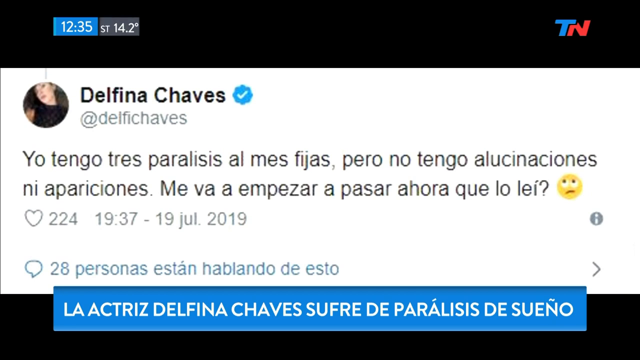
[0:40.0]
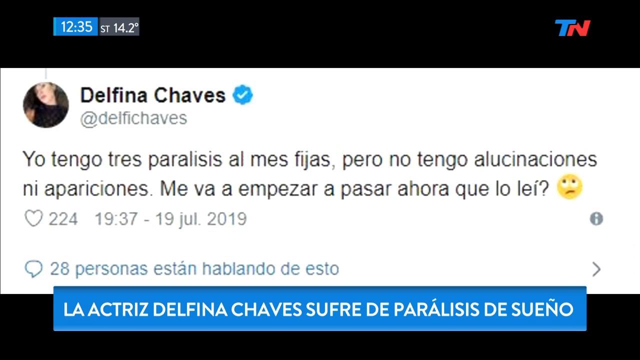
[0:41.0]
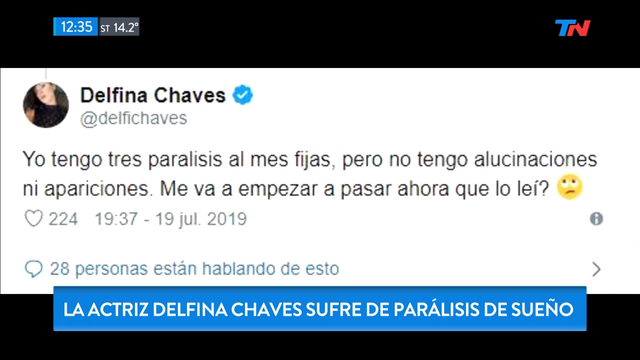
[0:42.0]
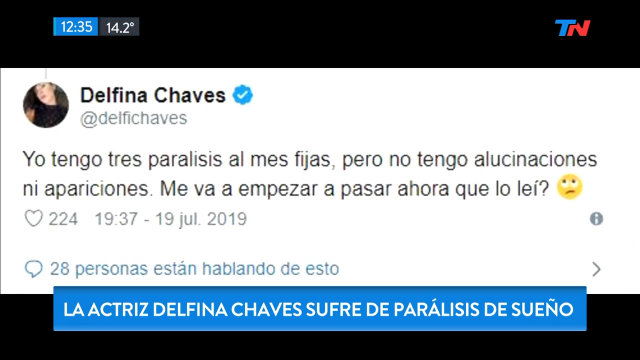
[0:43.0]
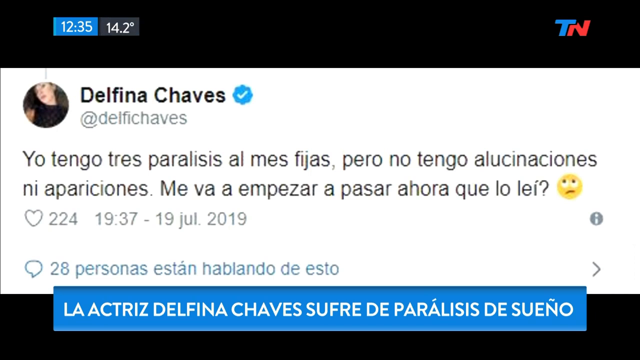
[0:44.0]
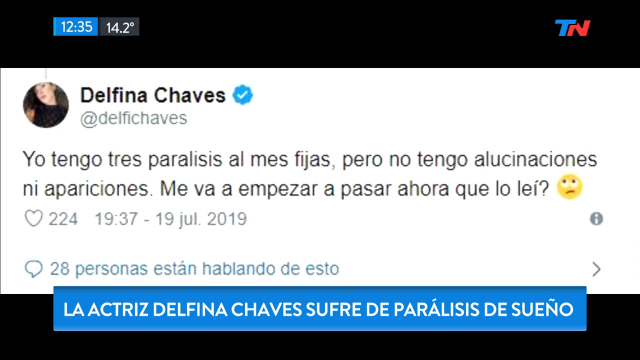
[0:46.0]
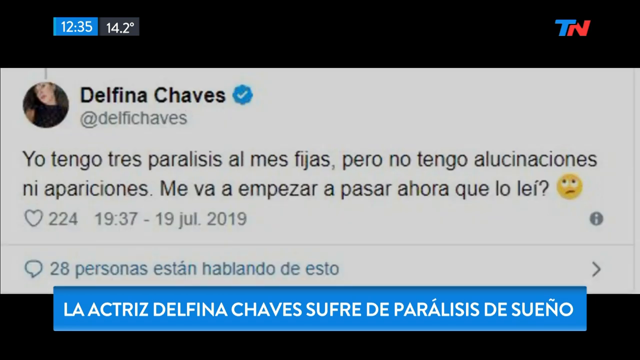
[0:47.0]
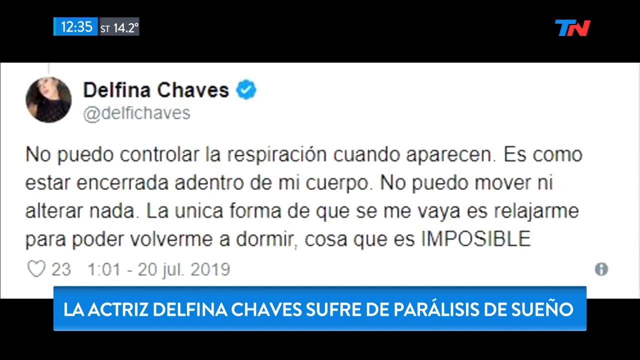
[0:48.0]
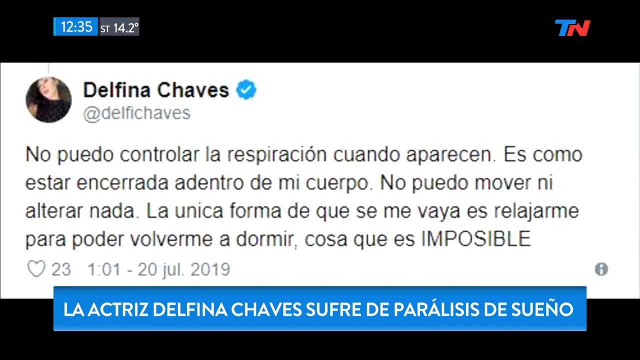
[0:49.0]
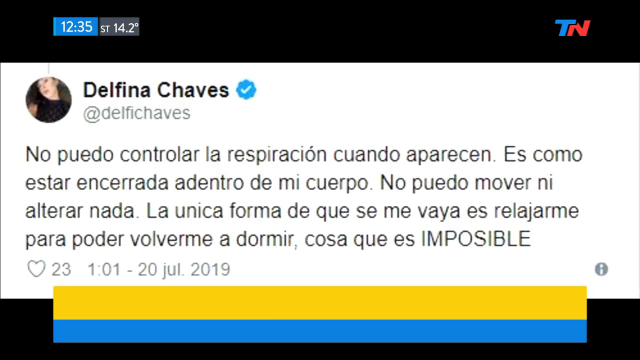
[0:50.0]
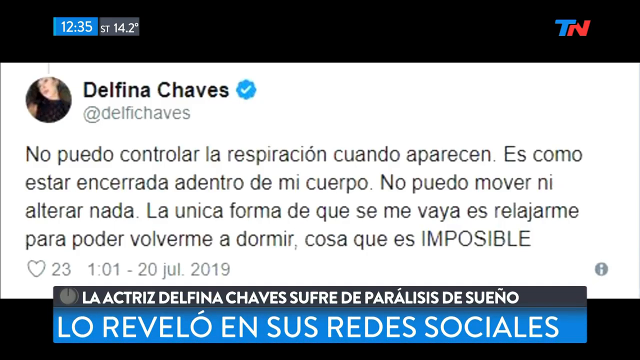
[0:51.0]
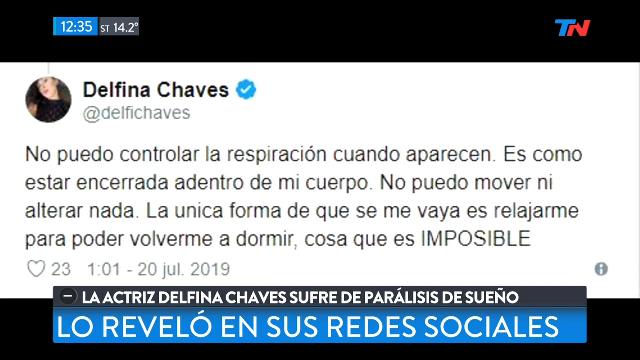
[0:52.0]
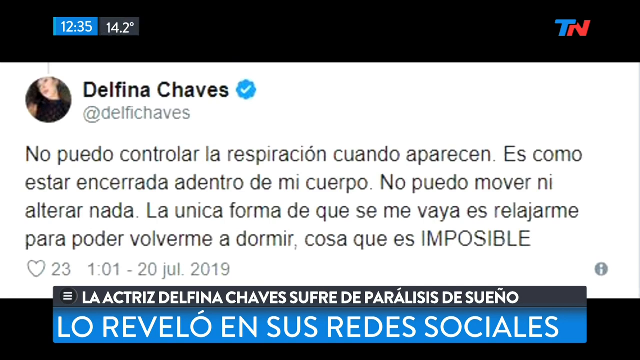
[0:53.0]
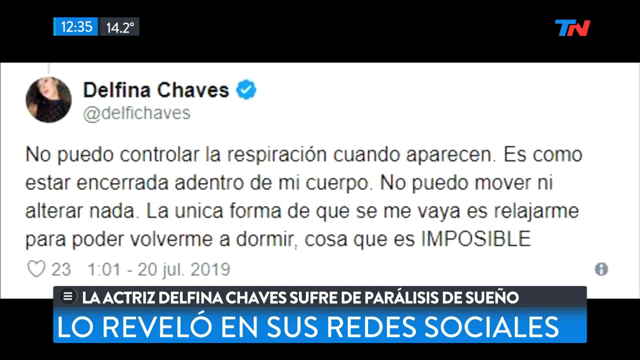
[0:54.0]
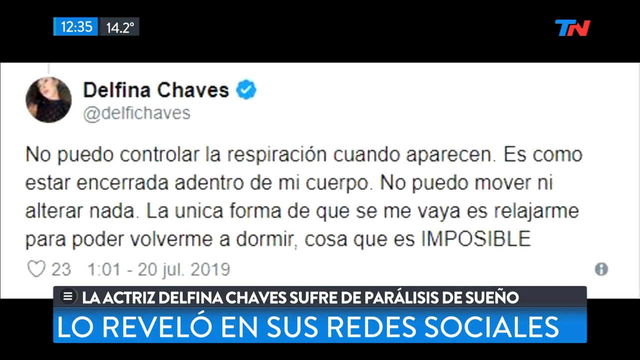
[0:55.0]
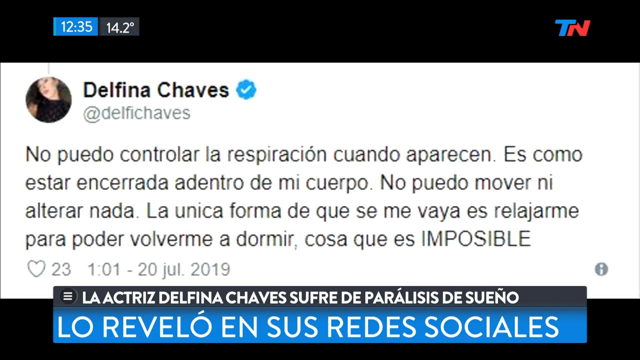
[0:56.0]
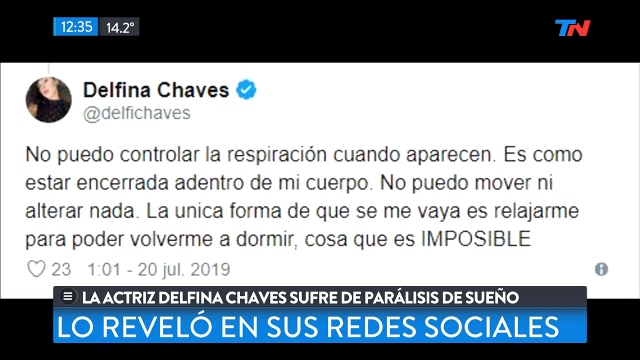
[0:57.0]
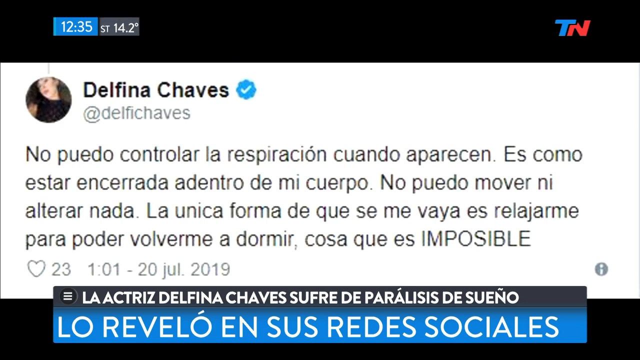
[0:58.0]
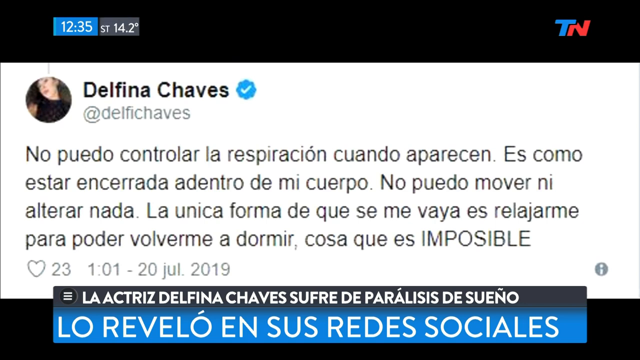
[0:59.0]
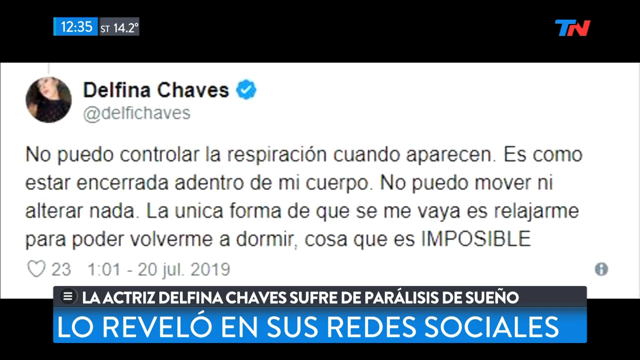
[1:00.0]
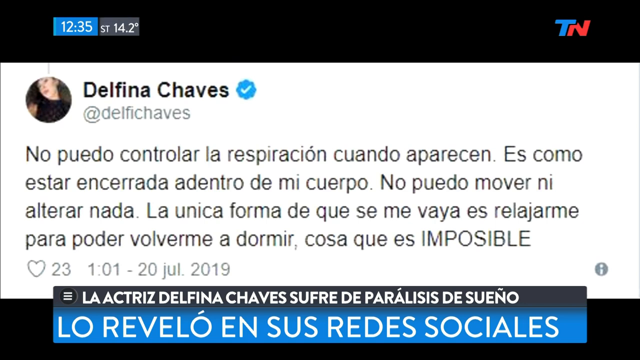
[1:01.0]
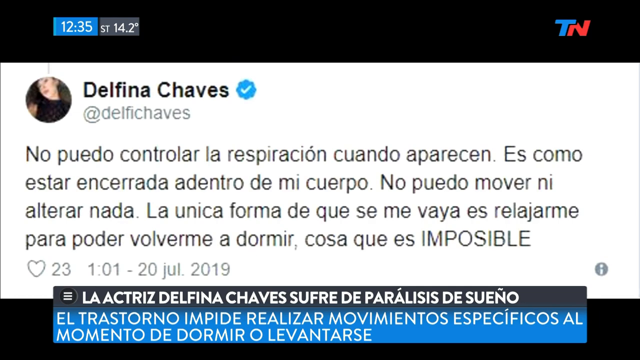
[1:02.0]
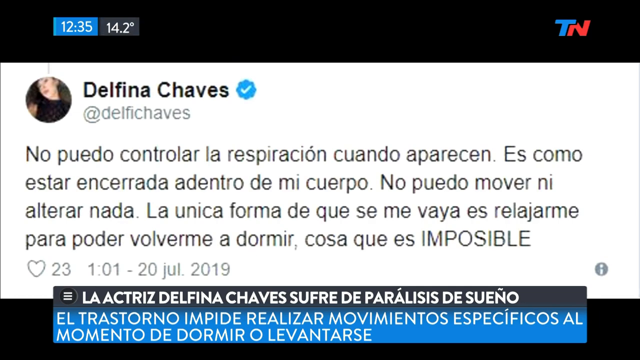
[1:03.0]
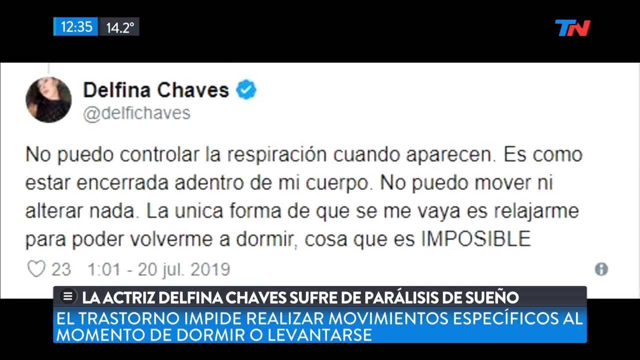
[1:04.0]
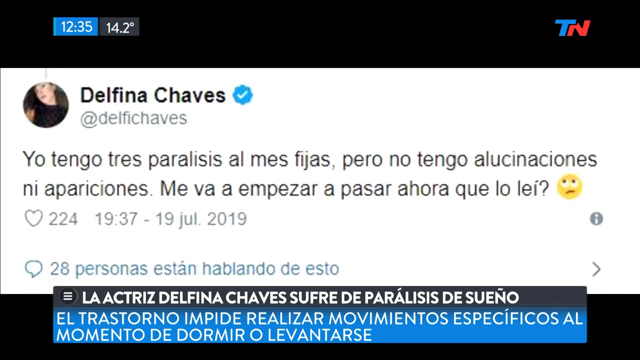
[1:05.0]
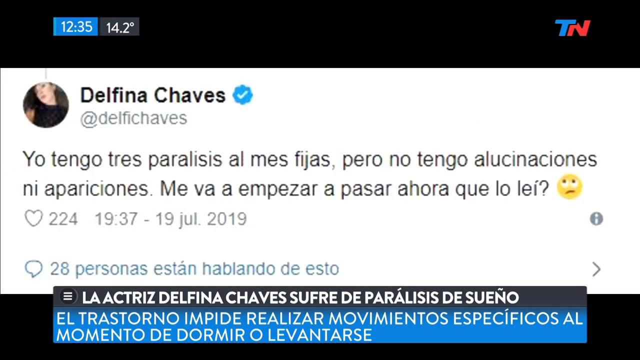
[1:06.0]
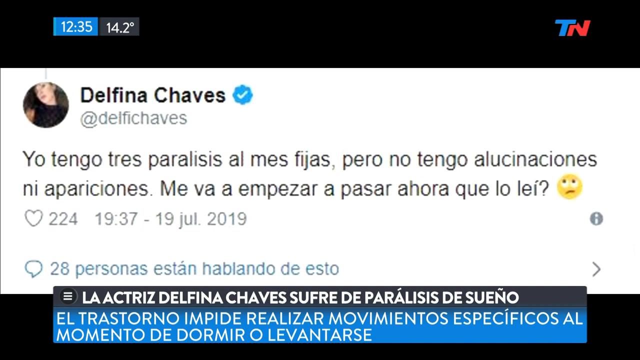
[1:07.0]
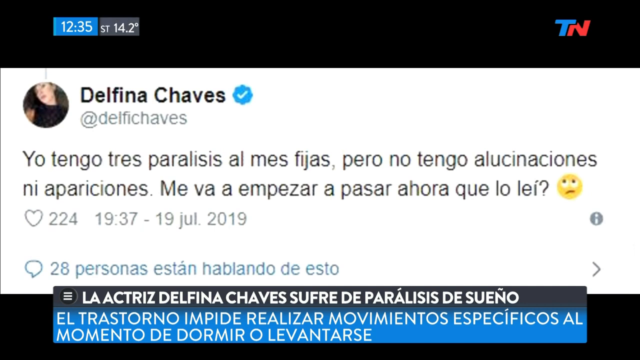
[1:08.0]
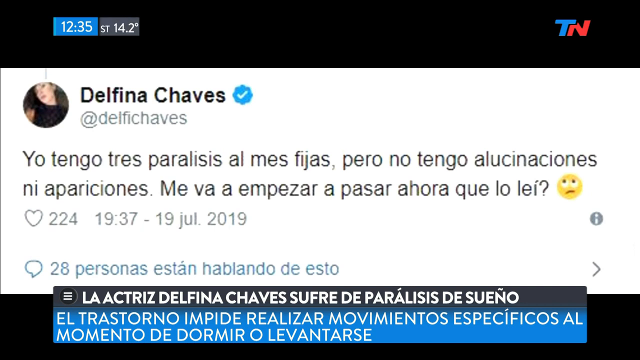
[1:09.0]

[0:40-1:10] The time shown is 12.35, and Delphine Chaves is trending, with her tweets and comments displayed. The comment ends with the English word "impossible" along with emojis, suggesting a negative comment. A blue verification badge is displayed next to the account.